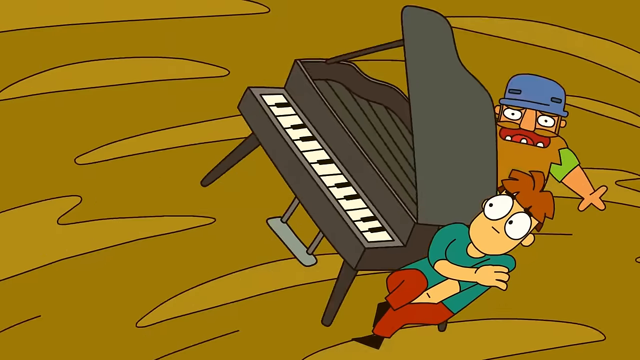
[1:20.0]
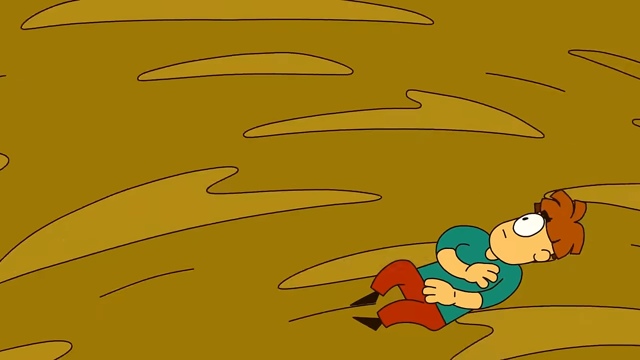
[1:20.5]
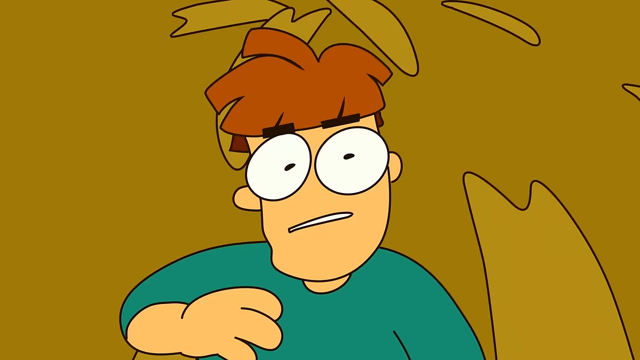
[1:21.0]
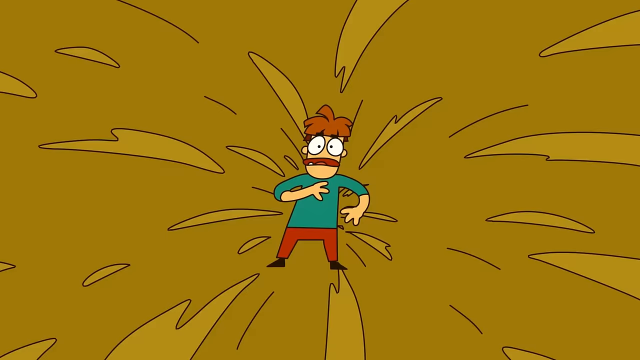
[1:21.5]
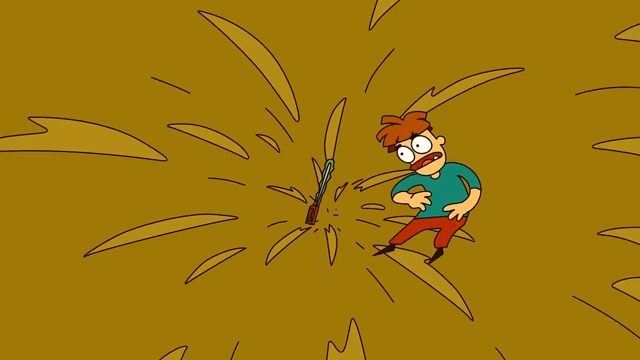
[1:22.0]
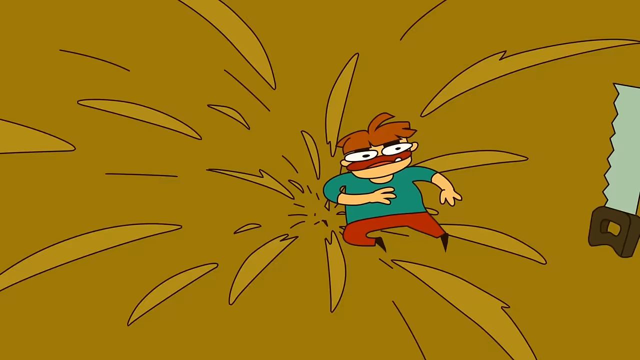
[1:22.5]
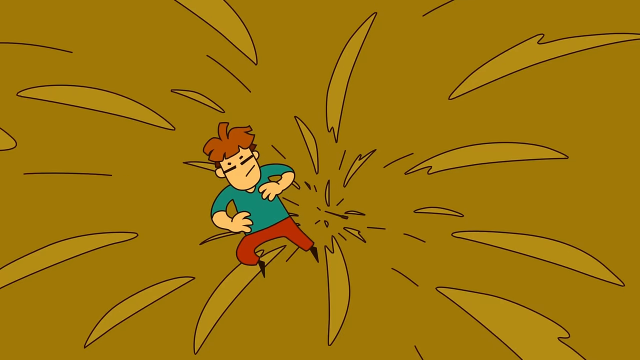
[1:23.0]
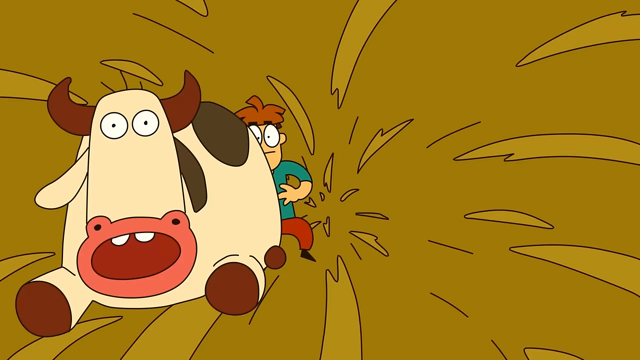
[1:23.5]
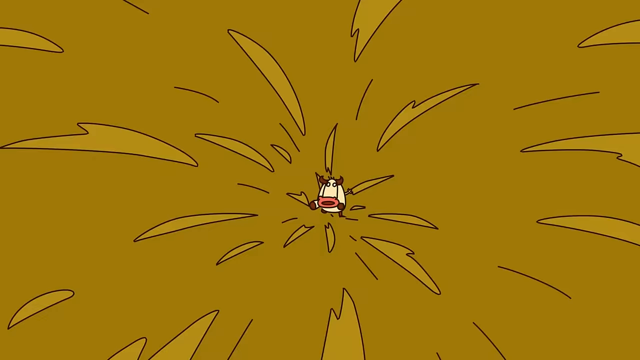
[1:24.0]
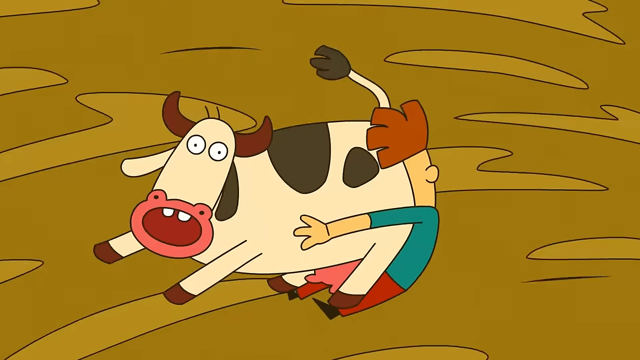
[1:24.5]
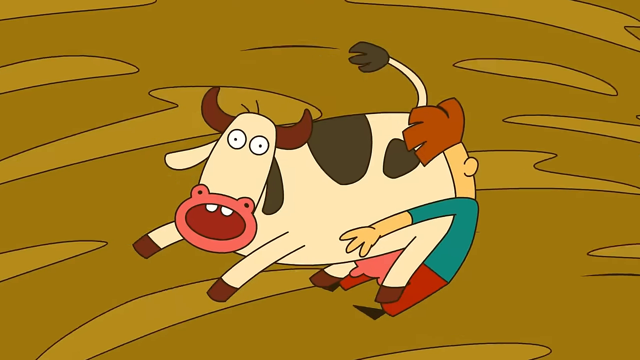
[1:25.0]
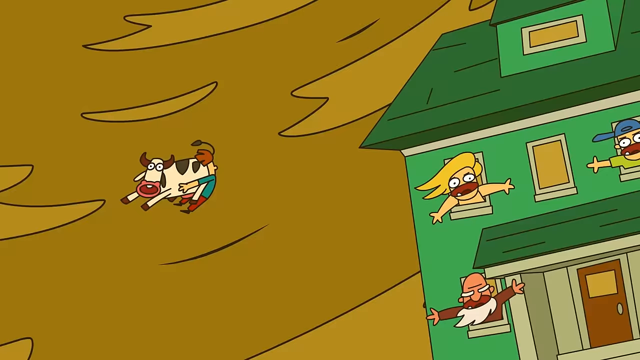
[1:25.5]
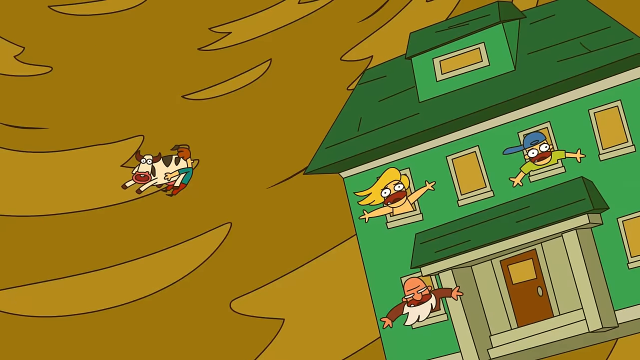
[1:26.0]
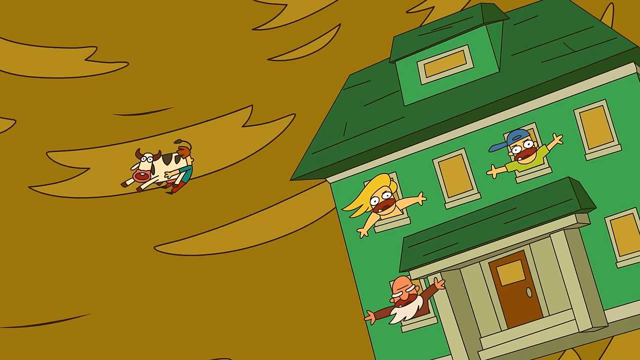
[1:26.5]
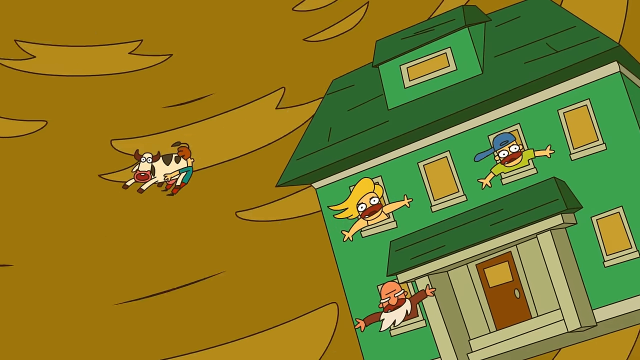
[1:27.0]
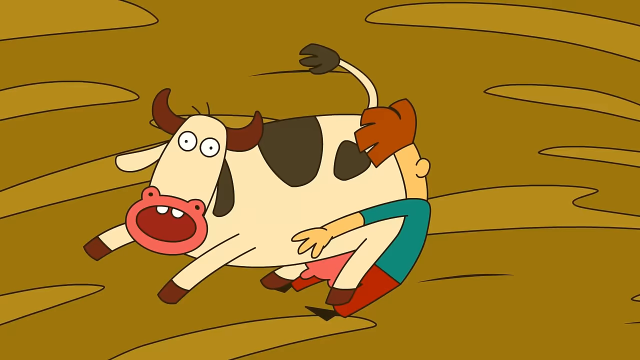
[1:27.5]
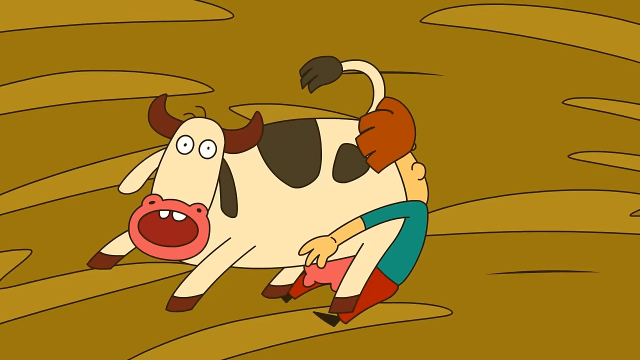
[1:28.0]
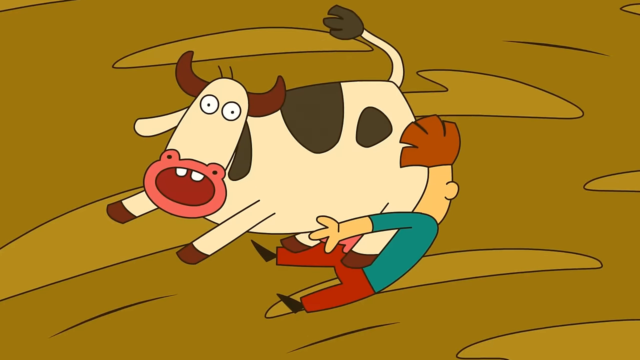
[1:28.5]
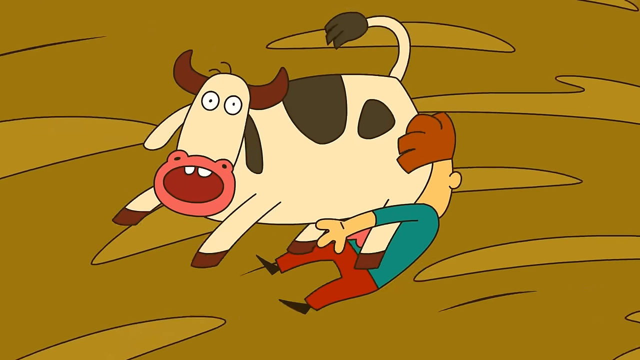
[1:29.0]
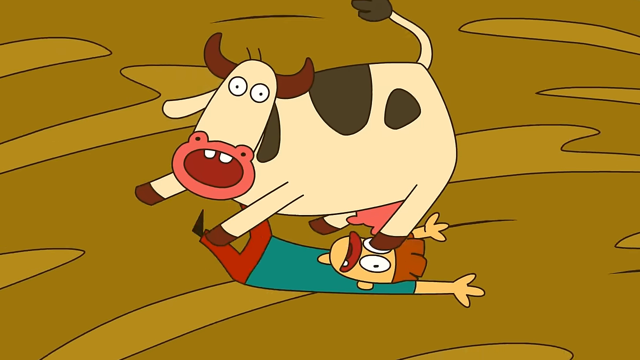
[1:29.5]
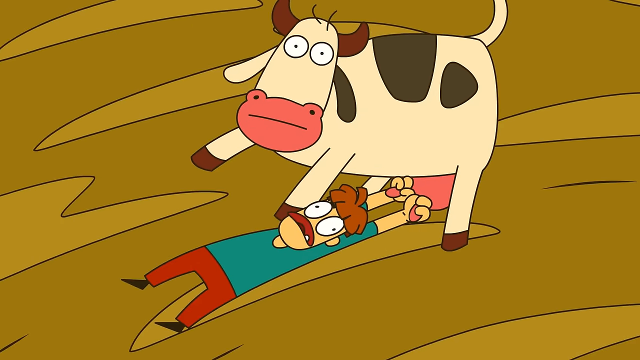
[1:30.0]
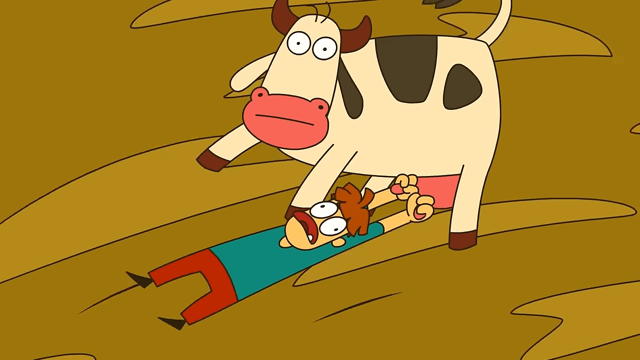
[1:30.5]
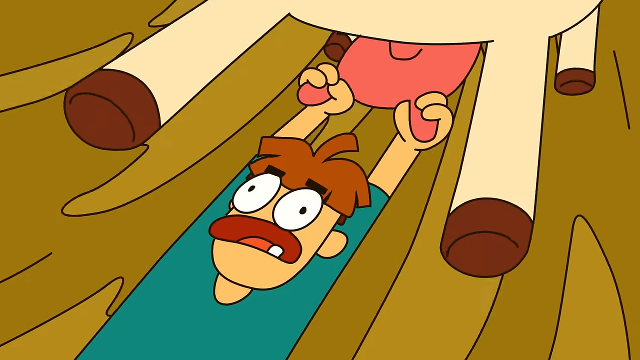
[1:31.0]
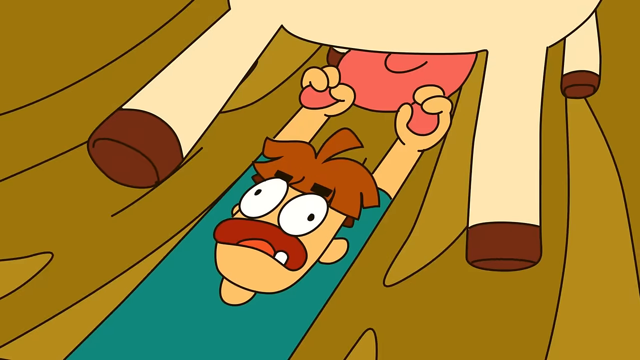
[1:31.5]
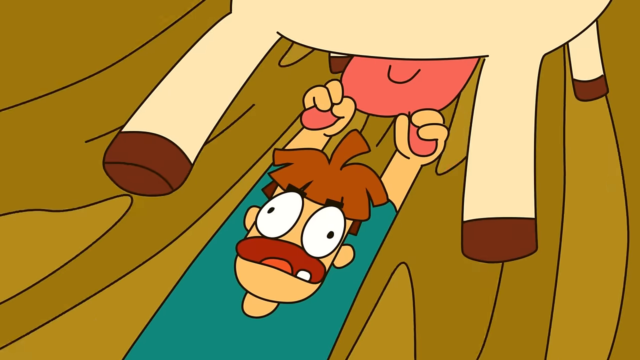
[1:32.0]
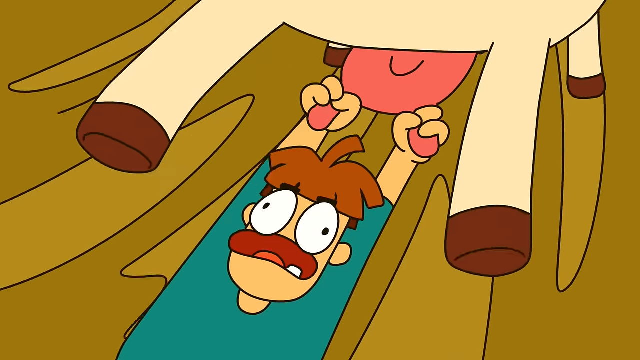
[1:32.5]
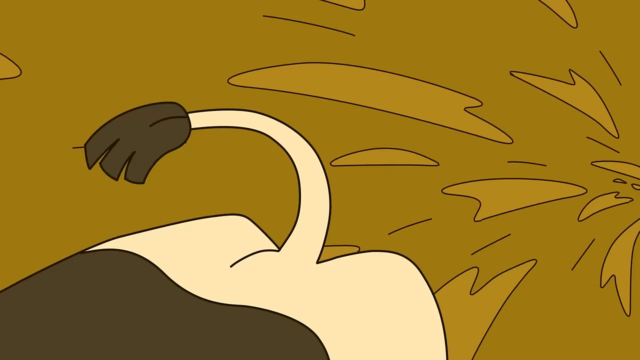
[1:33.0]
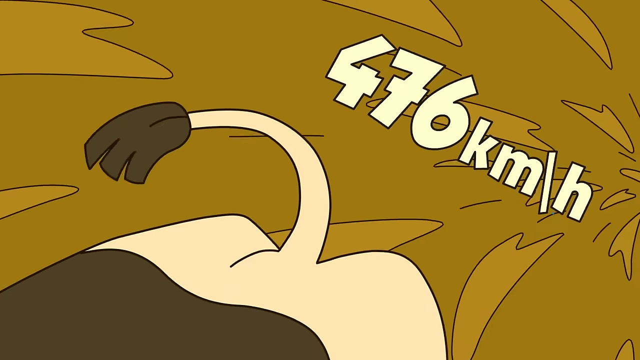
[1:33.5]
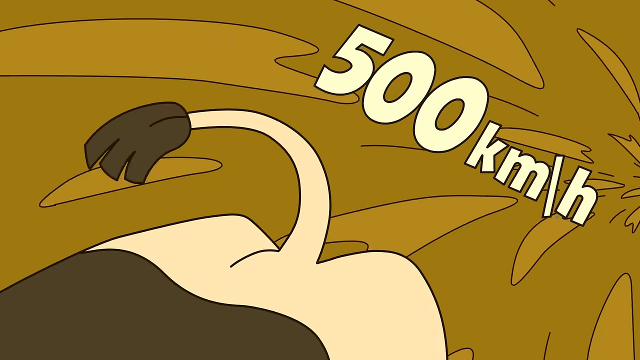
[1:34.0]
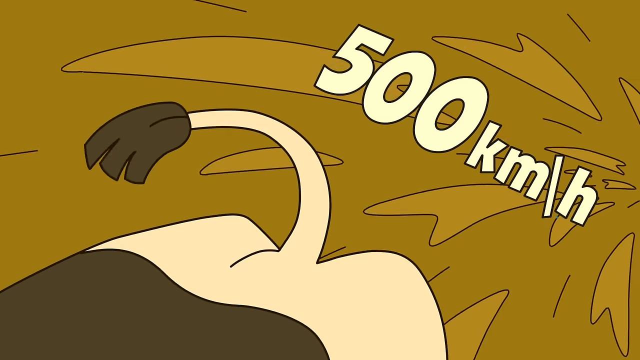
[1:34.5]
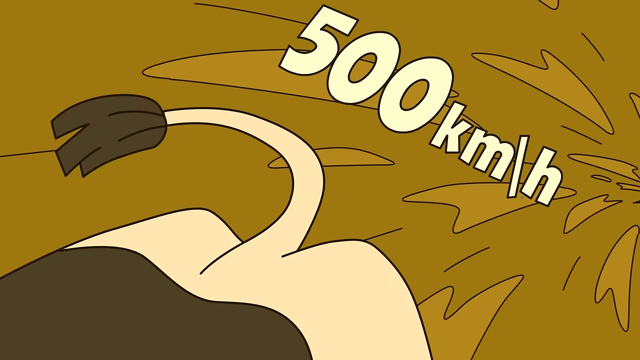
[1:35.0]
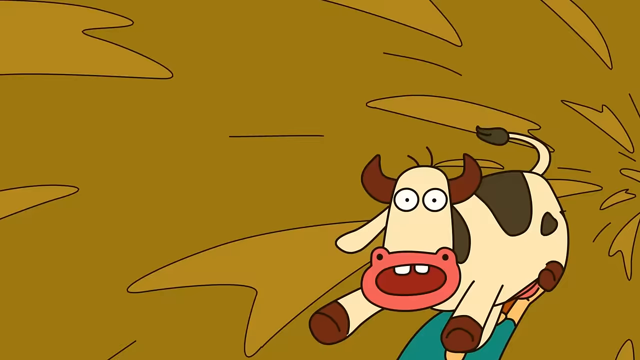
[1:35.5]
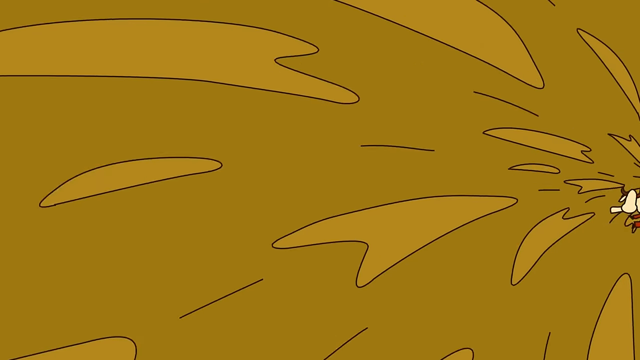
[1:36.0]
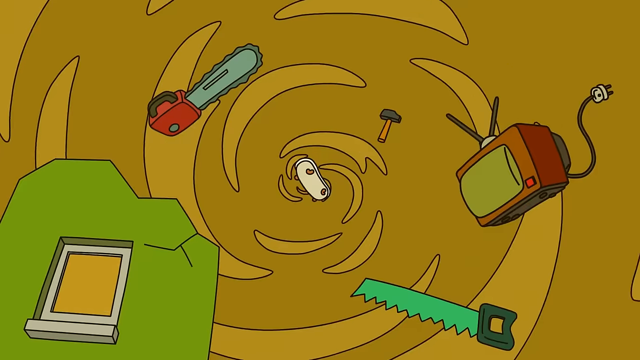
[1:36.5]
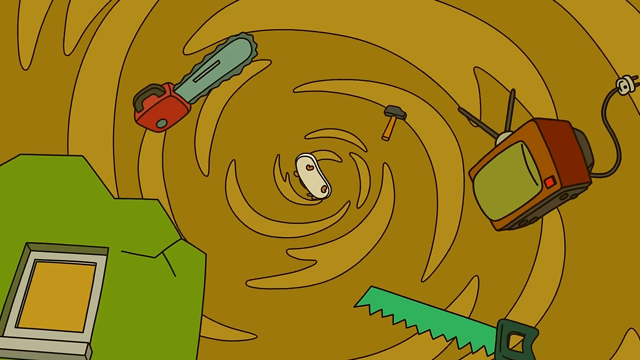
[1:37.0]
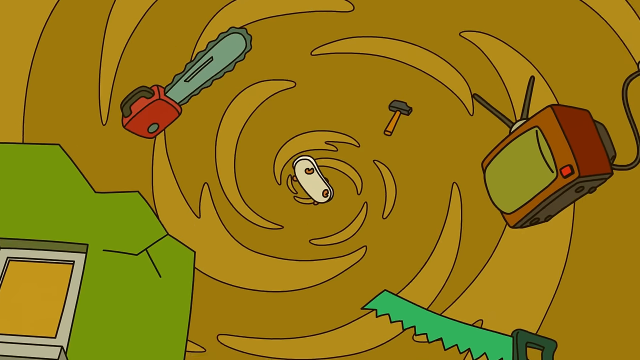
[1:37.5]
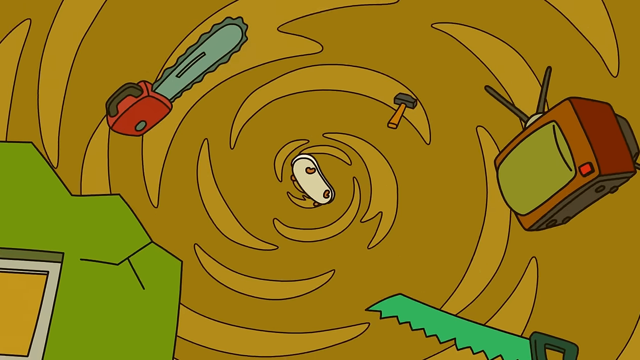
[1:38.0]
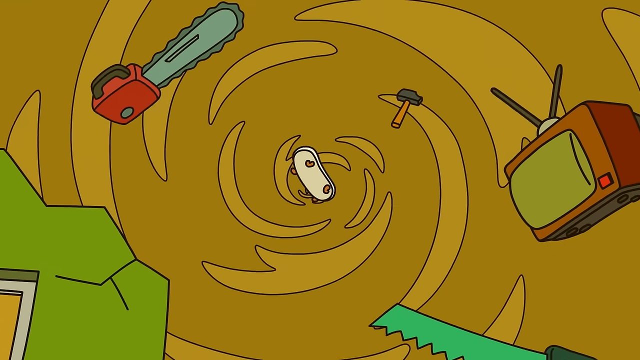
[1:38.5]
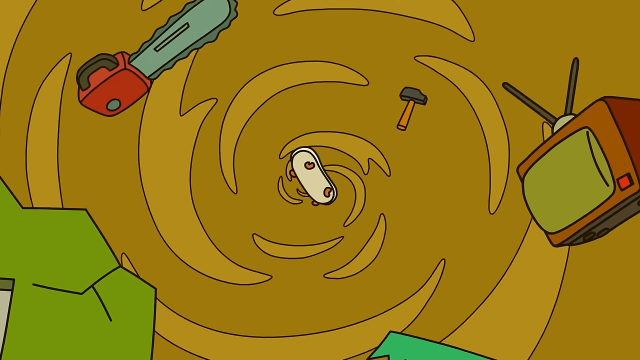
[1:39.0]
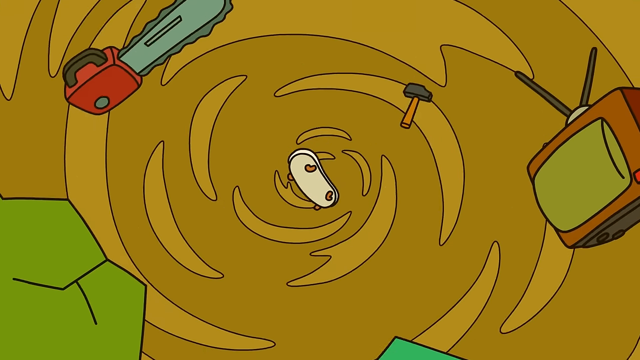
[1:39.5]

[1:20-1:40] A black cartoonish piano with white and black keys is in the center of the screen, with some kind of grayish foot device below it. Two cartoonish characters are to the right of the piano, both near it. The upper one has a bluish hat, a beard, tan or brownish skin and a green short-sleeved shirt. The one below him has brown hair, a greenish or bluish, kind of teal green short-sleeved shirt, red pants and black shoes. A brown swirling background behind them makes it look like they are in some kind of air mass, maybe a tornado. Different objects fly toward the brown-haired character: a hand saw and a white and black cow that looks like a Holstein, which hits him in the face with its butt. On the right side of the screen, a green house is shown with three characters sticking out of the windows, all appearing to be in some kind of swirling thing like a tornado.